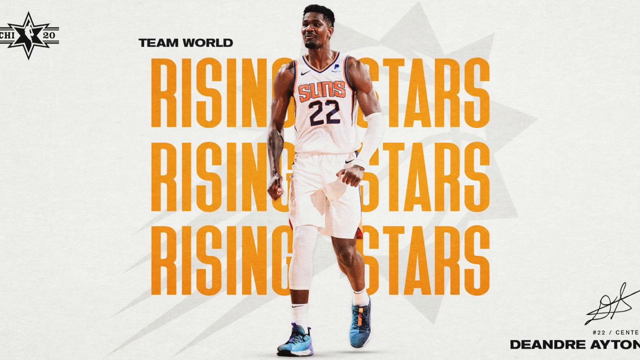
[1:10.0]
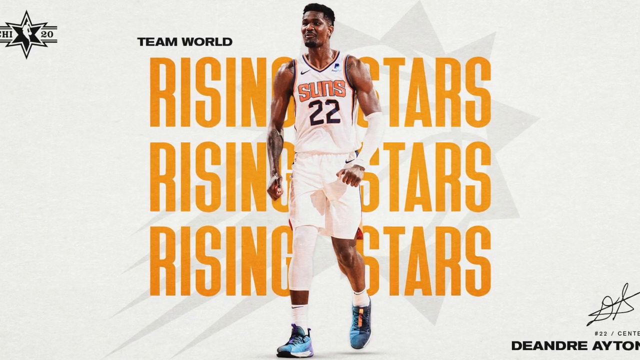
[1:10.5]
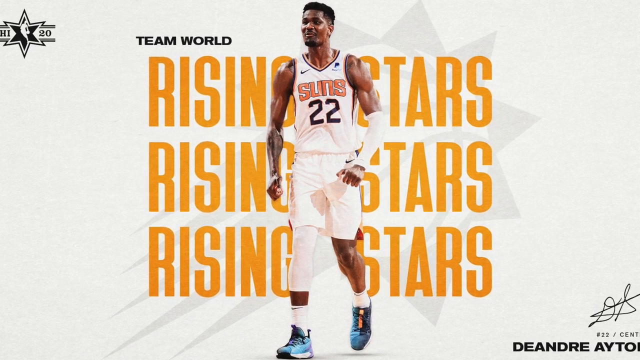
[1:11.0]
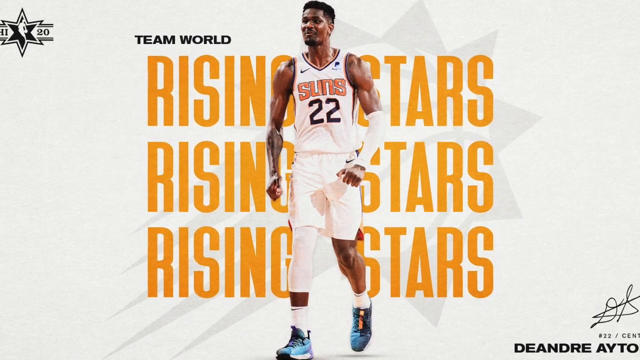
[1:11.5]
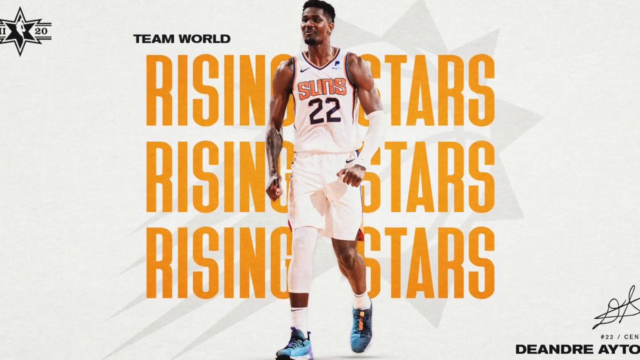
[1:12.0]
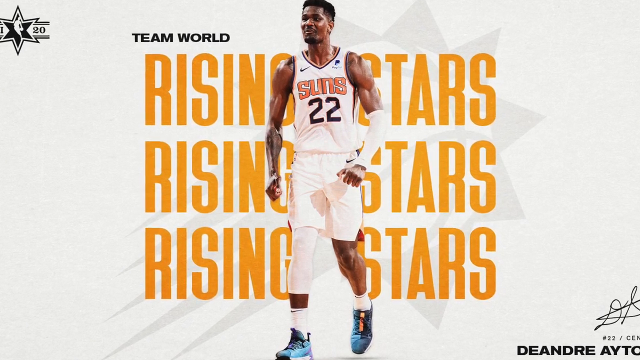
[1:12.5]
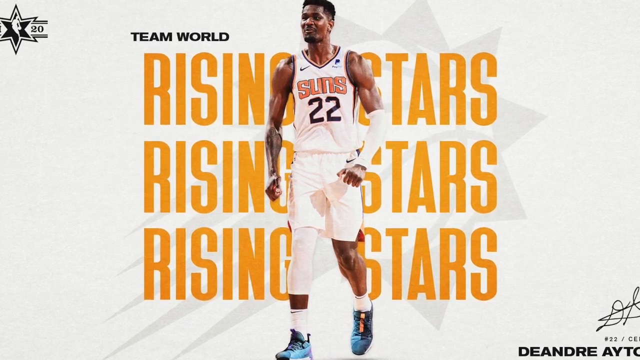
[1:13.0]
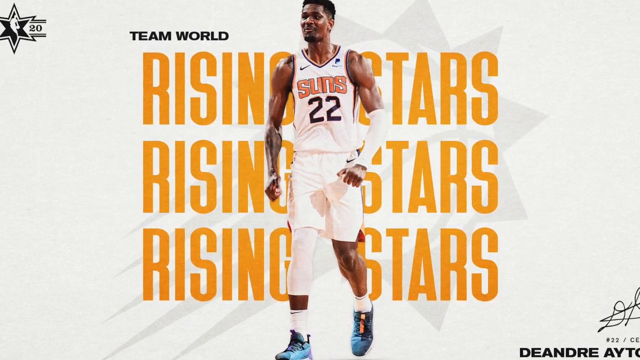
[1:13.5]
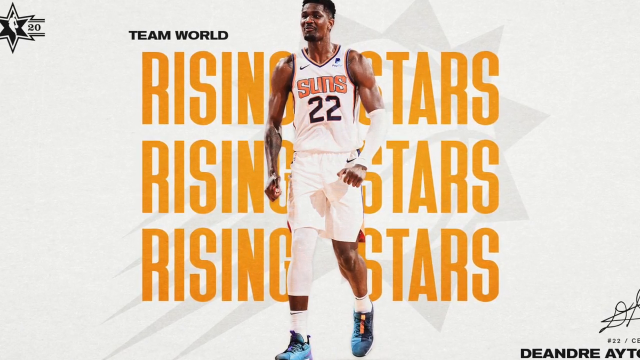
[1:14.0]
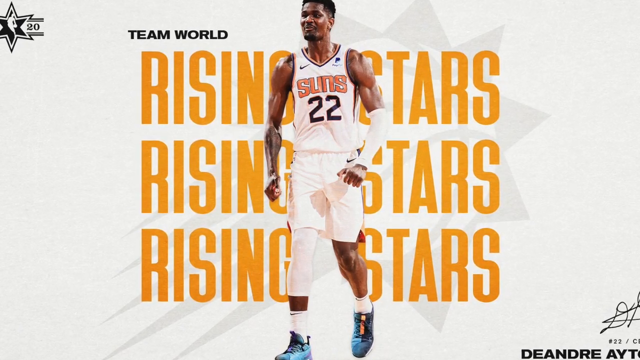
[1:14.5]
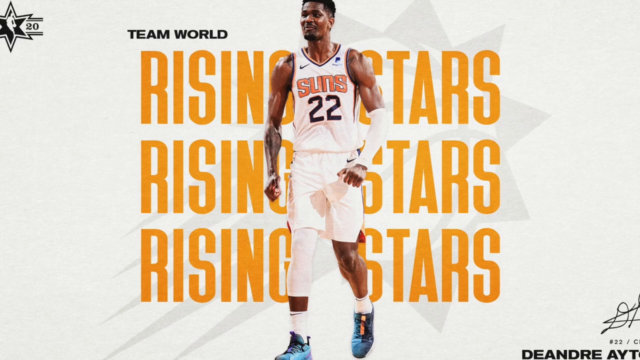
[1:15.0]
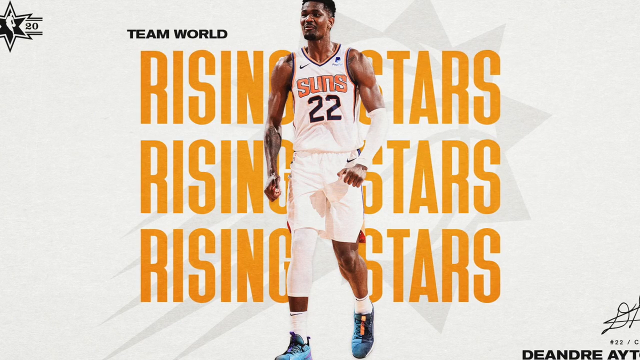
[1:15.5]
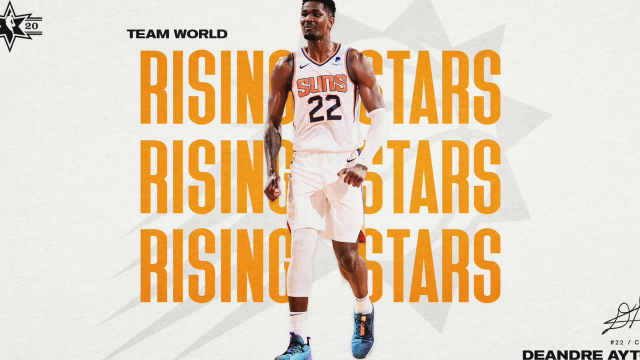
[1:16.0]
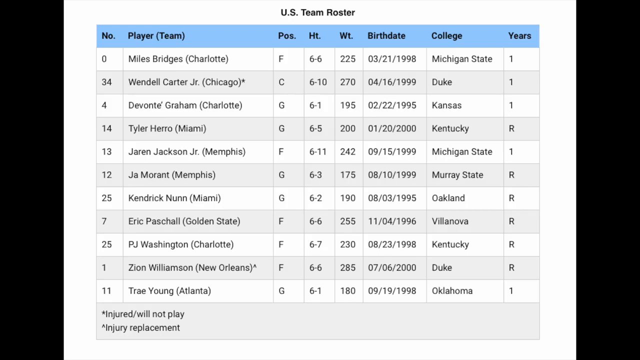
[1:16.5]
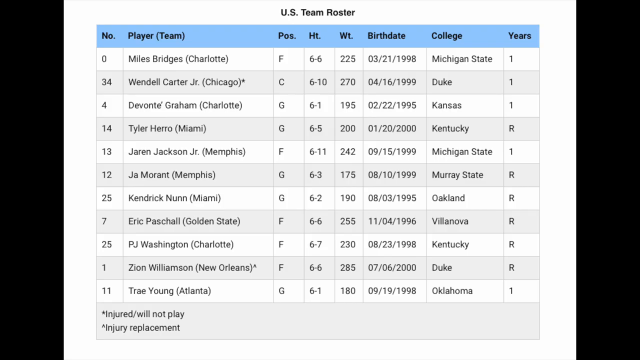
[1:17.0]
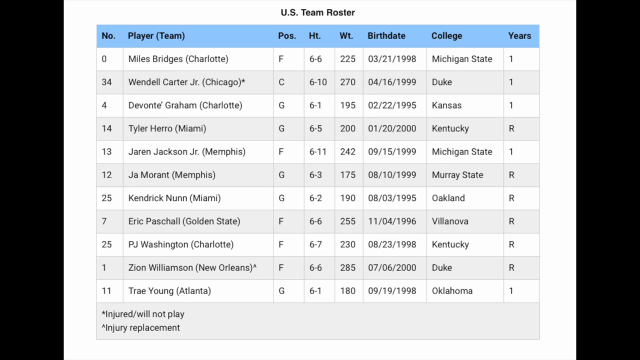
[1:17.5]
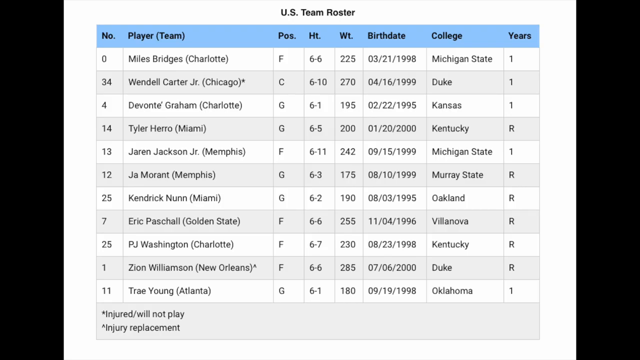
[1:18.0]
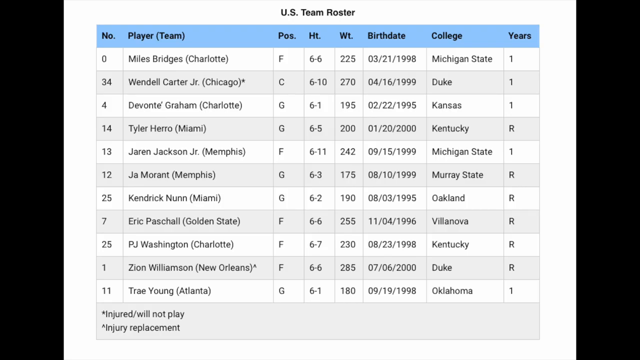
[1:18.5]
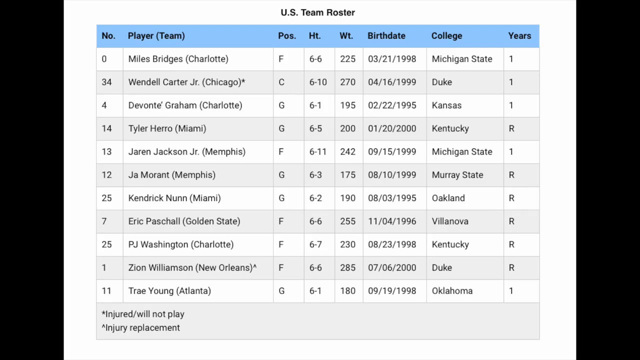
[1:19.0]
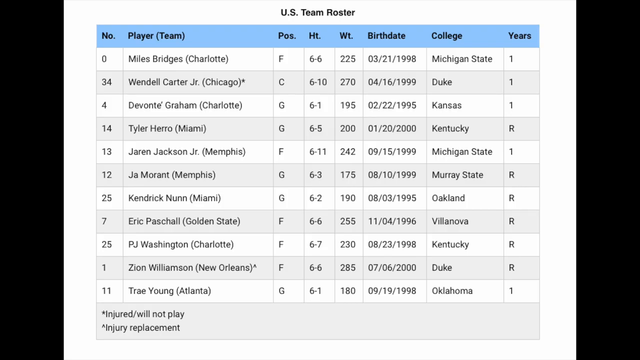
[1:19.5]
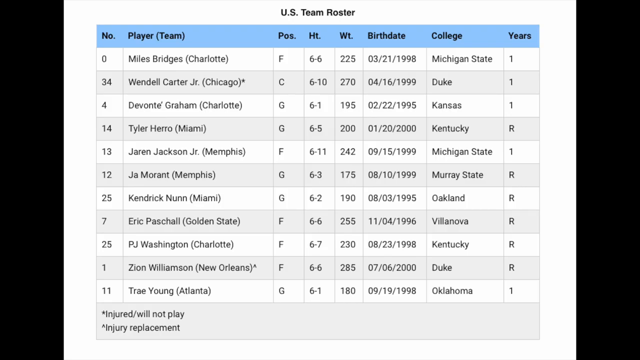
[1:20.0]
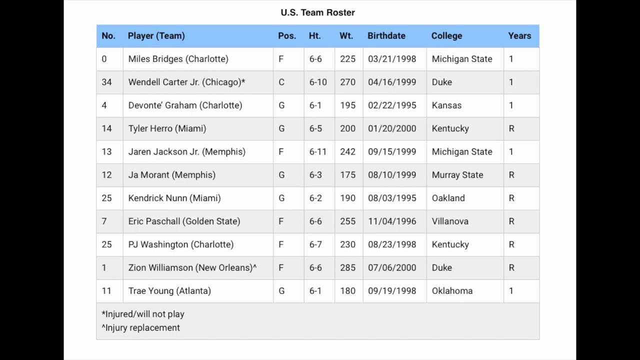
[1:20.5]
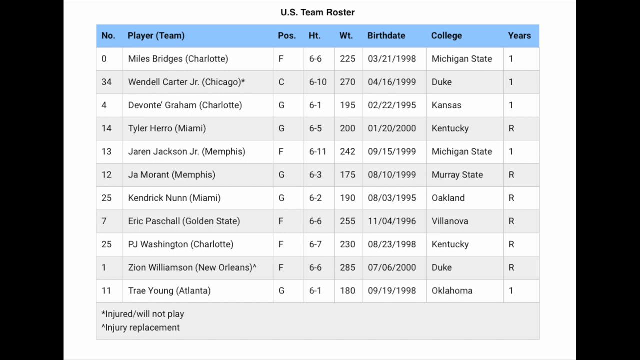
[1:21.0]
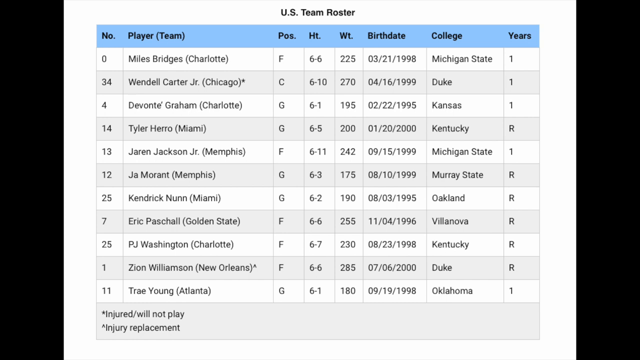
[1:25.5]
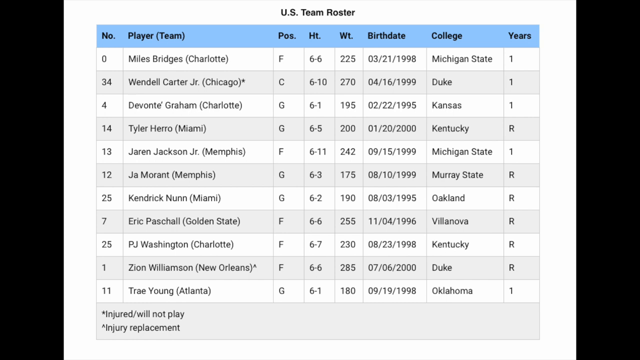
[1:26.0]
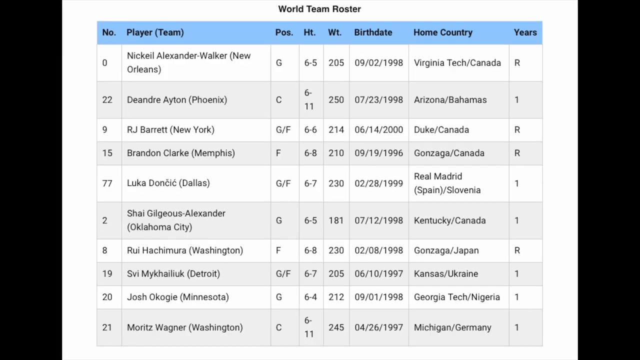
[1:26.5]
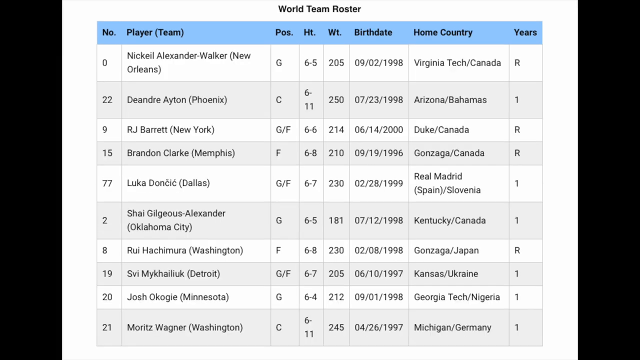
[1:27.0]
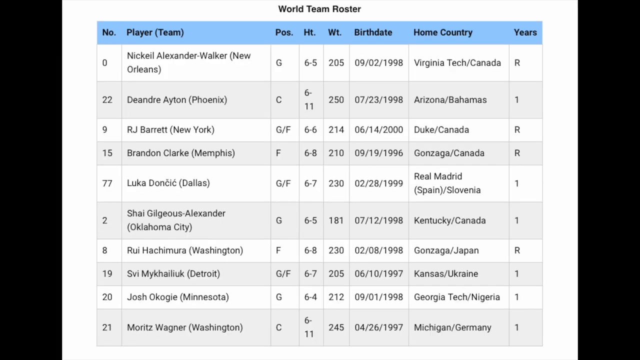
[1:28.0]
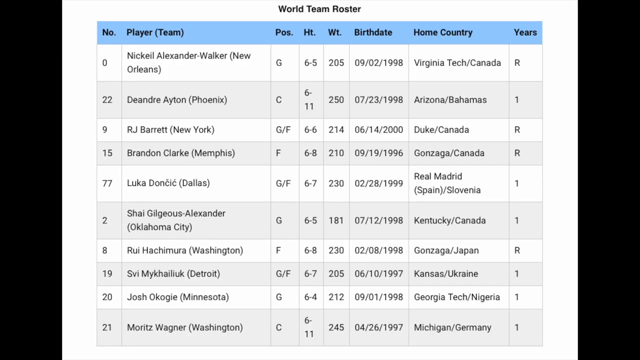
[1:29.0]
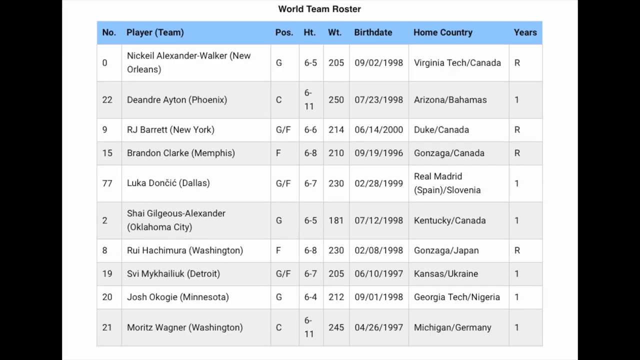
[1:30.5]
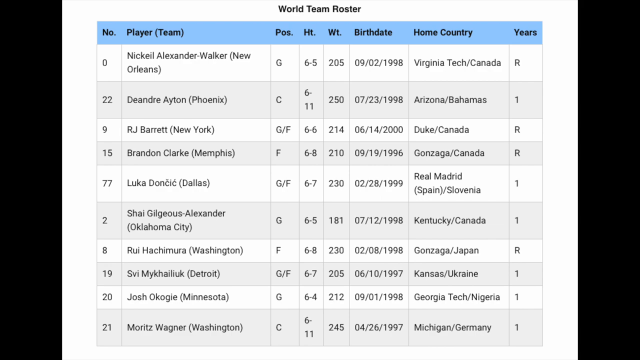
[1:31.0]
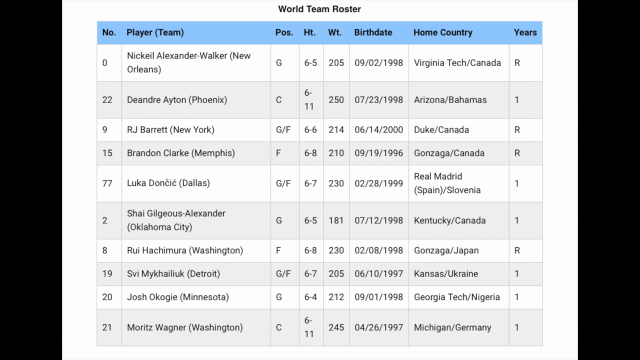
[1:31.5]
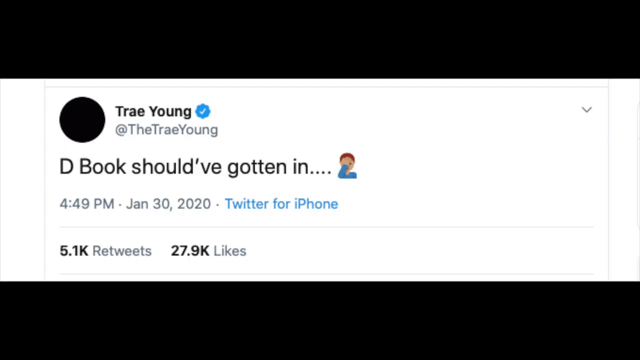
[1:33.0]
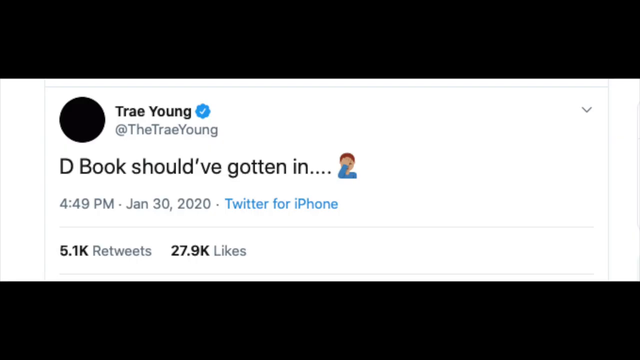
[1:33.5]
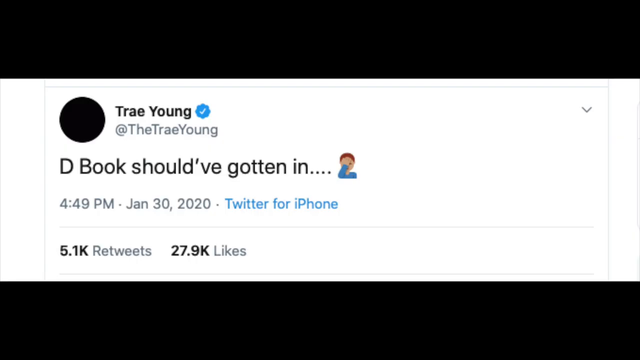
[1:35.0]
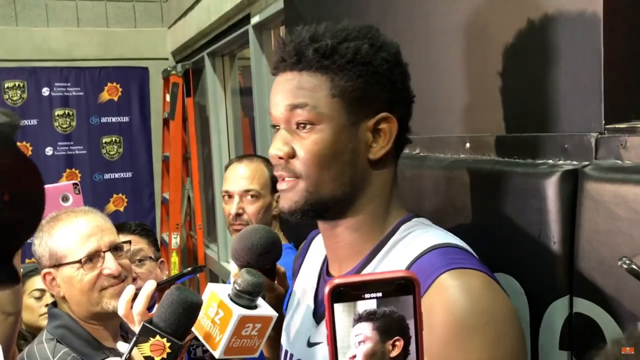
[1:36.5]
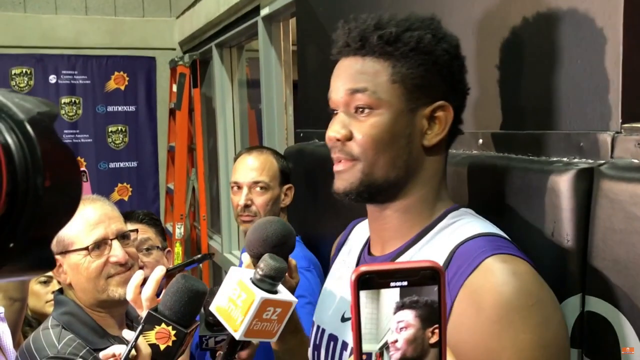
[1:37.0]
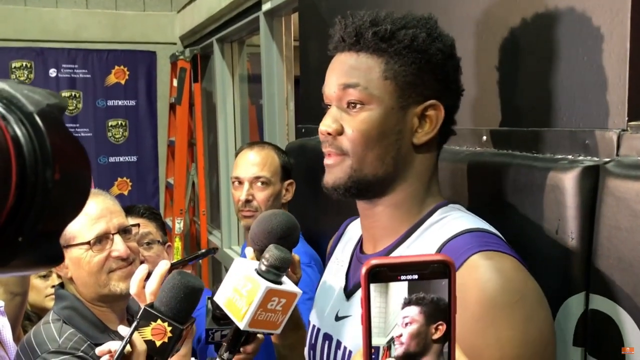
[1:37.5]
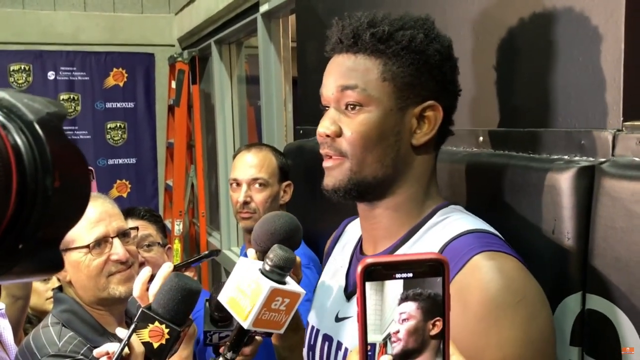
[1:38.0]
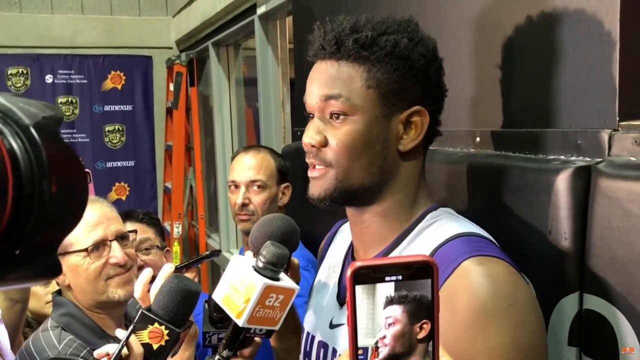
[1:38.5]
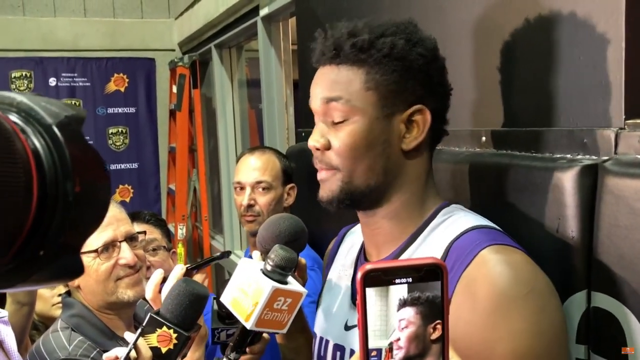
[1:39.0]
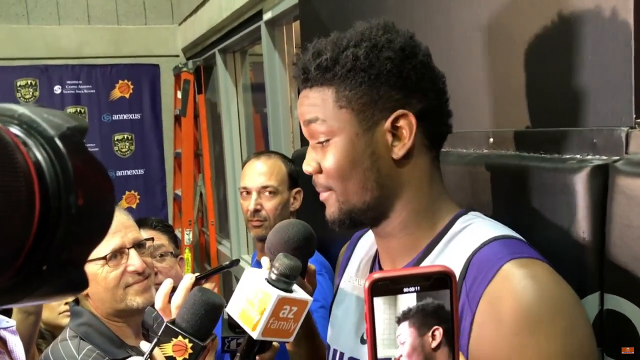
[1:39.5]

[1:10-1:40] The basketball player stays in the middle, looking to the left with his arms at his sides, in an all-white uniform. The scene changes to a table of players listing, from left to right, jersey number, player name, position, height, weight, birth date, college, and, on the far right, the number of years played in the league. The list then changes to different names, with the title "World Team Roster" at the top; the players listed on the left side have changed in this other table. The scene changes to a post made on Twitter by someone named Trae Young, reading "D Book should've gotten in..." followed by a face palm emoji. Next, an NBA player on the right side, facing the left, gives a press conference, with many people around him holding microphones.